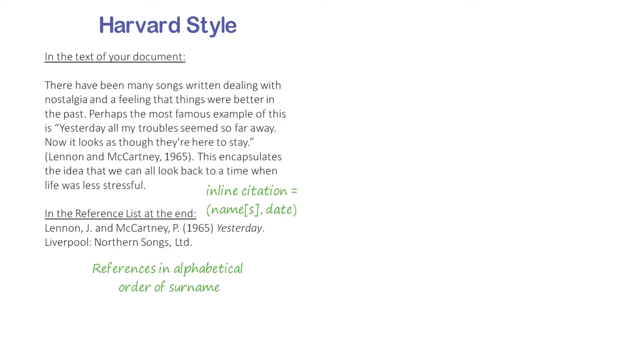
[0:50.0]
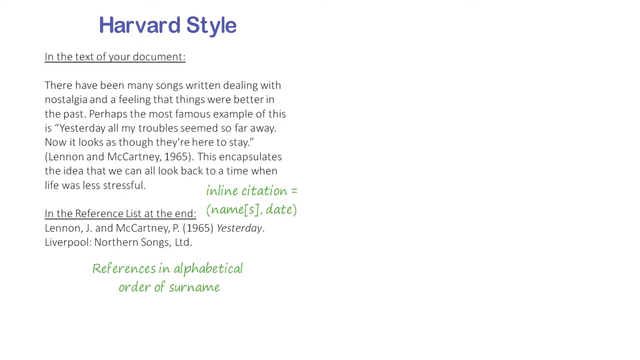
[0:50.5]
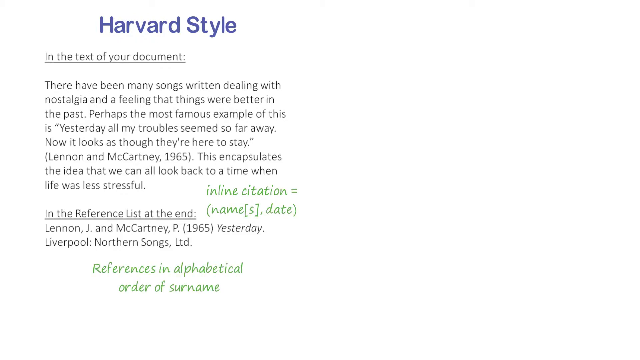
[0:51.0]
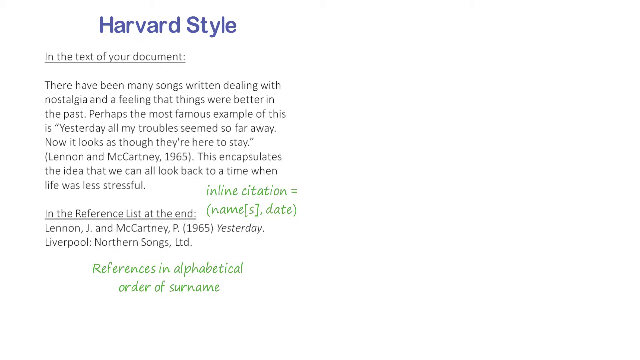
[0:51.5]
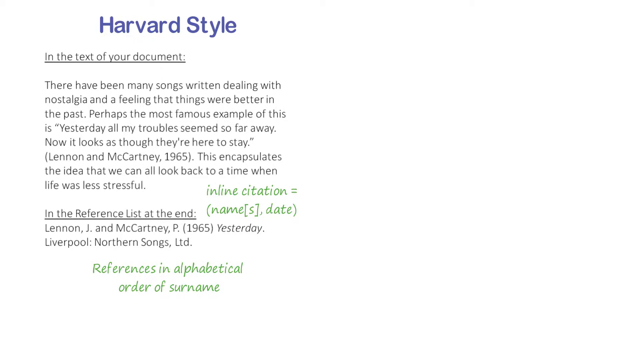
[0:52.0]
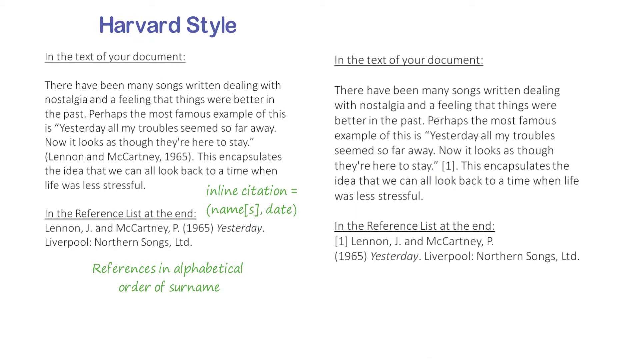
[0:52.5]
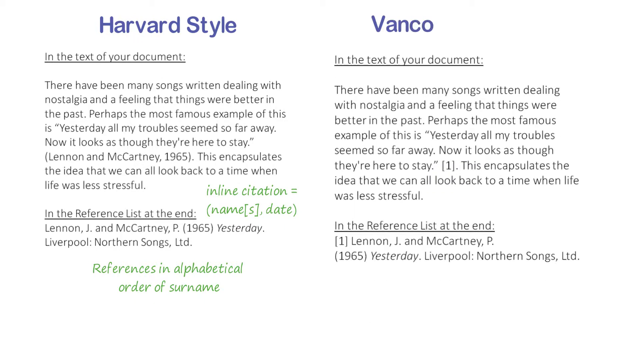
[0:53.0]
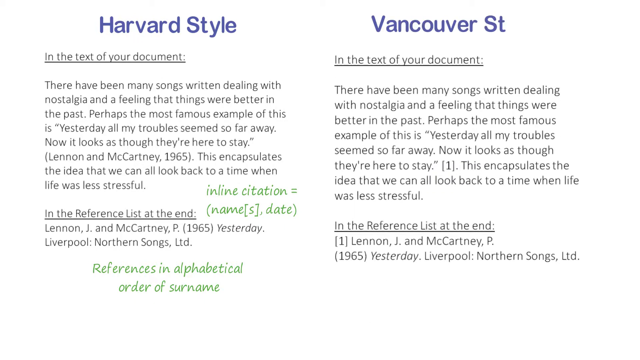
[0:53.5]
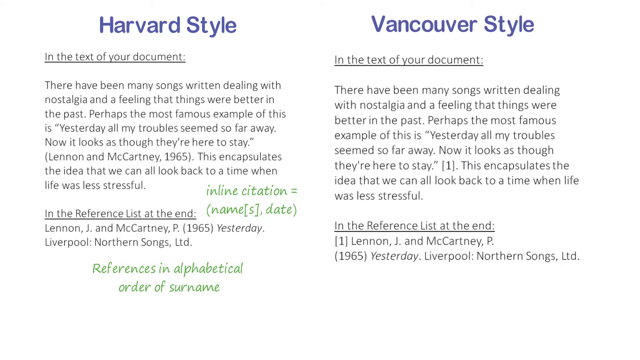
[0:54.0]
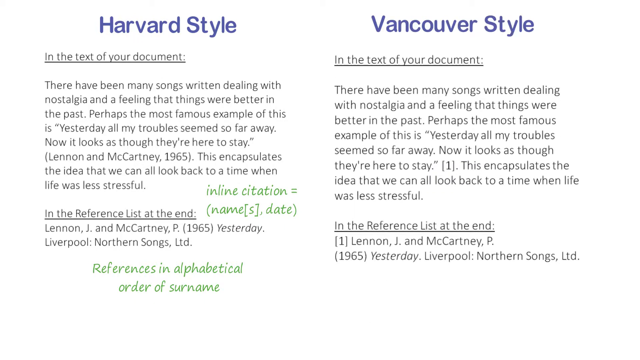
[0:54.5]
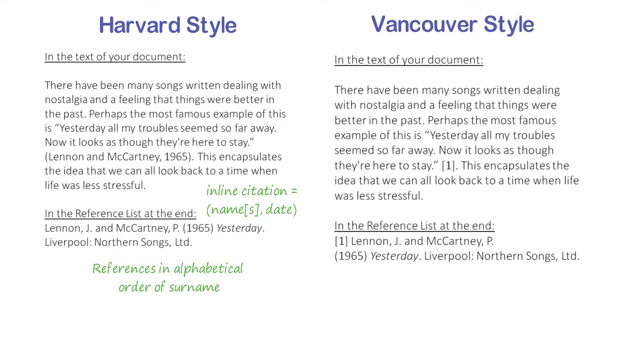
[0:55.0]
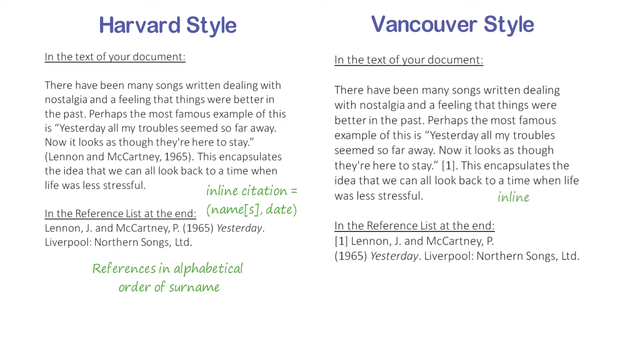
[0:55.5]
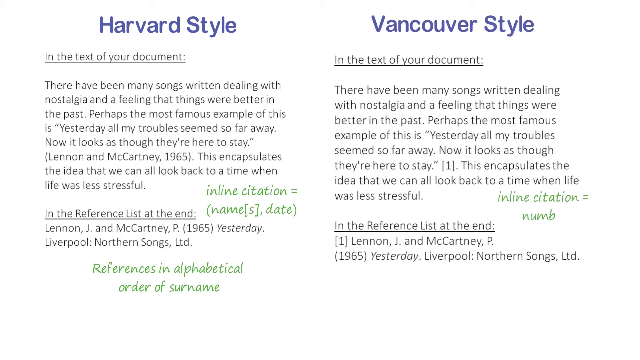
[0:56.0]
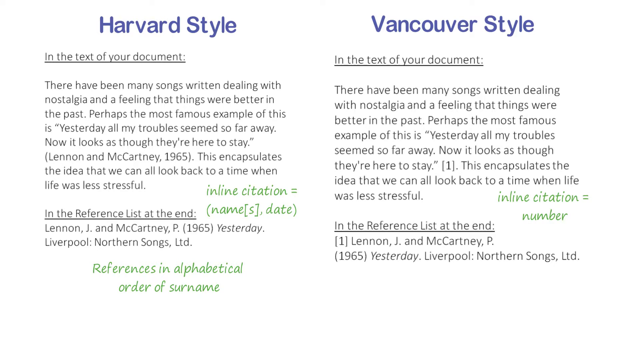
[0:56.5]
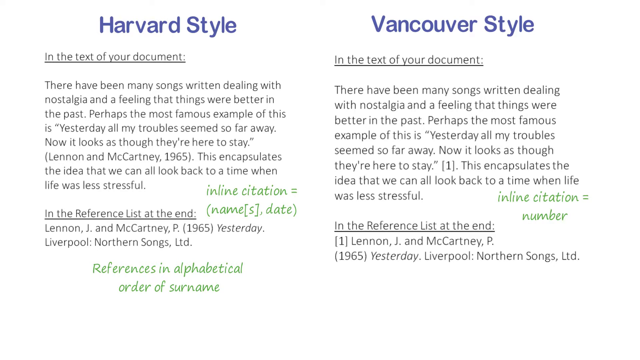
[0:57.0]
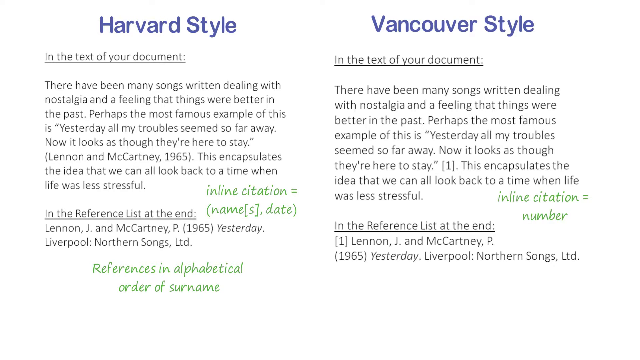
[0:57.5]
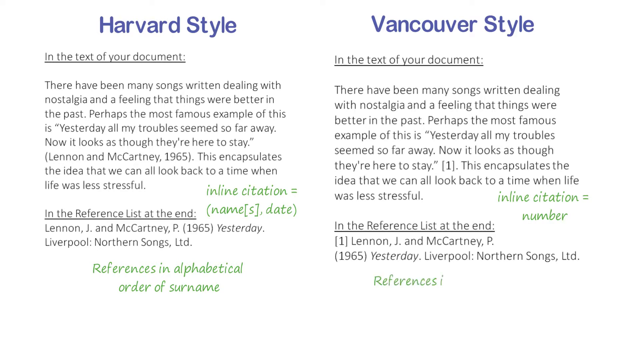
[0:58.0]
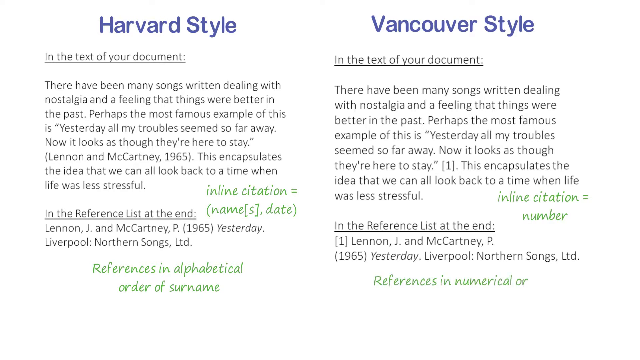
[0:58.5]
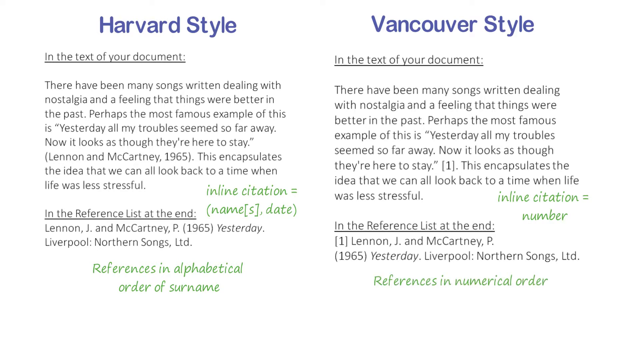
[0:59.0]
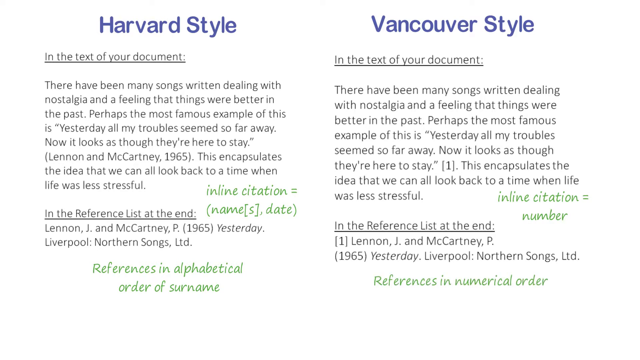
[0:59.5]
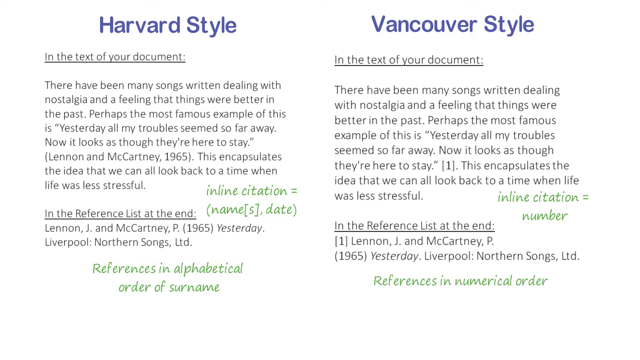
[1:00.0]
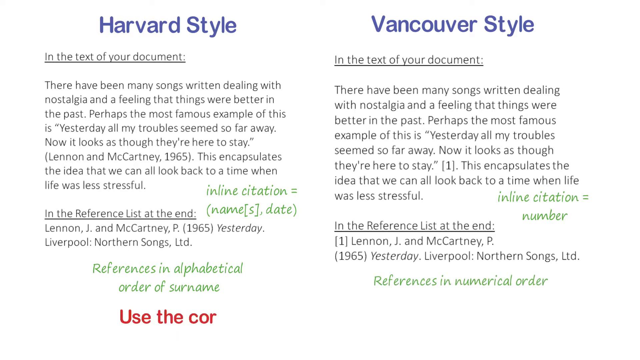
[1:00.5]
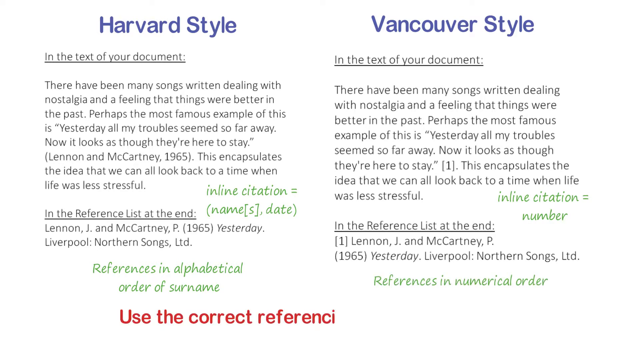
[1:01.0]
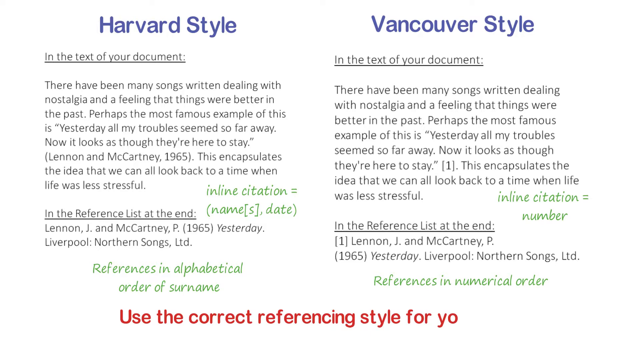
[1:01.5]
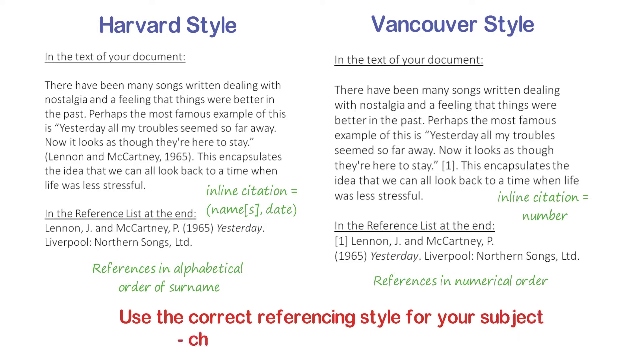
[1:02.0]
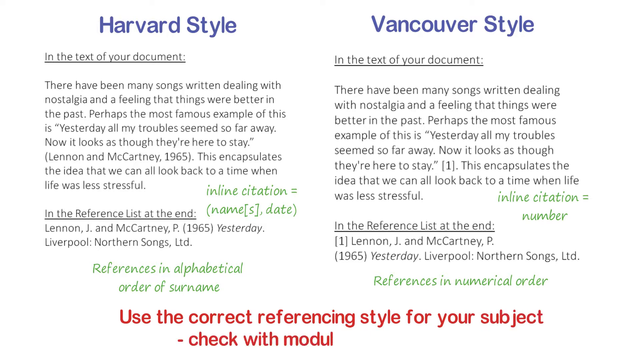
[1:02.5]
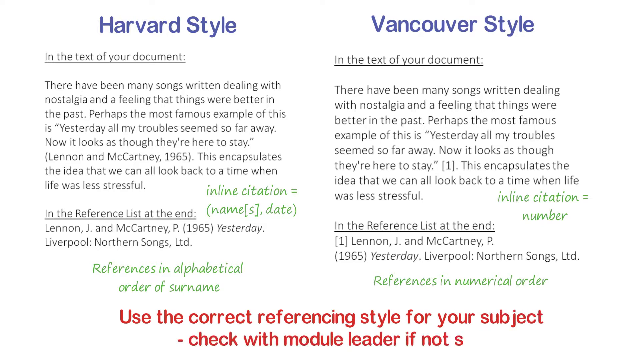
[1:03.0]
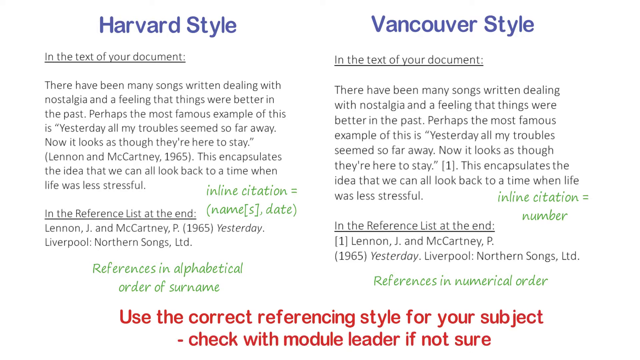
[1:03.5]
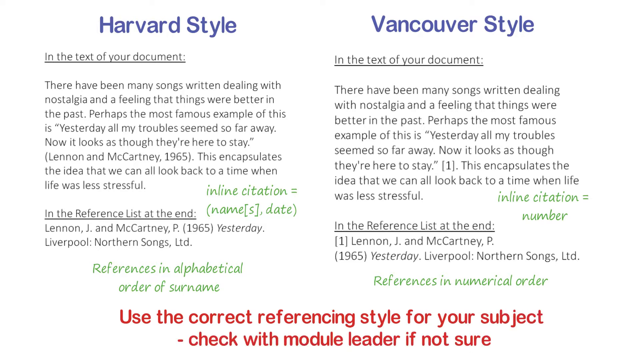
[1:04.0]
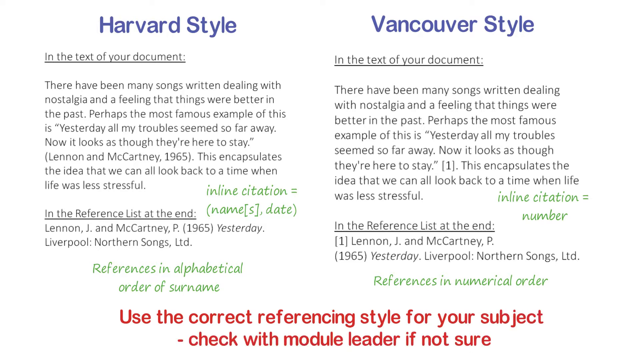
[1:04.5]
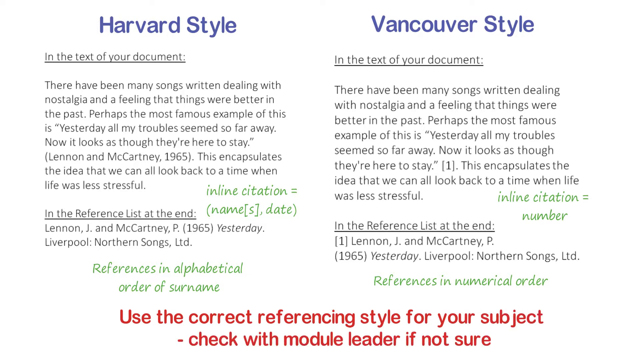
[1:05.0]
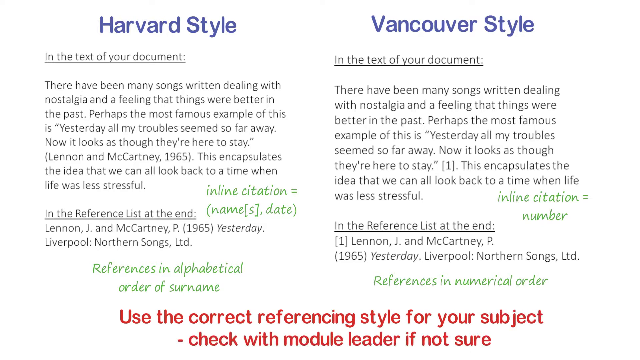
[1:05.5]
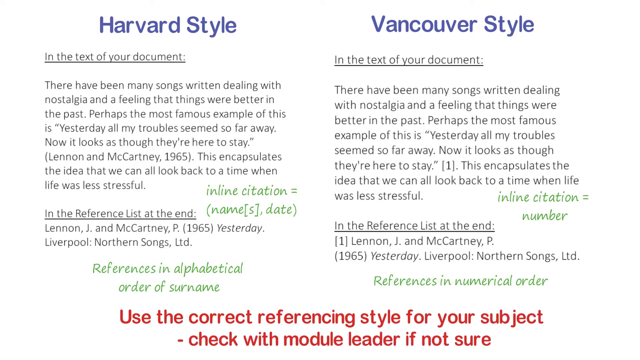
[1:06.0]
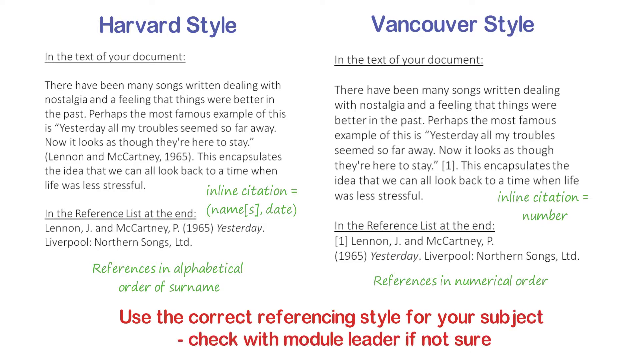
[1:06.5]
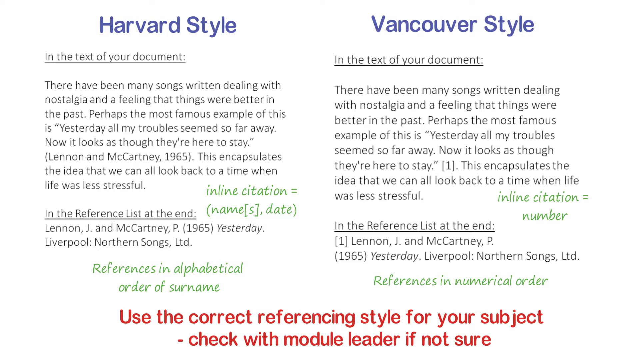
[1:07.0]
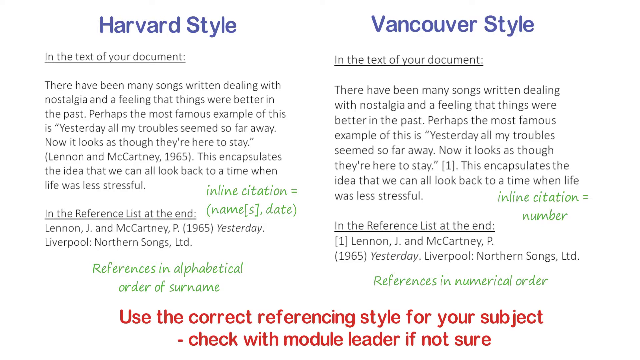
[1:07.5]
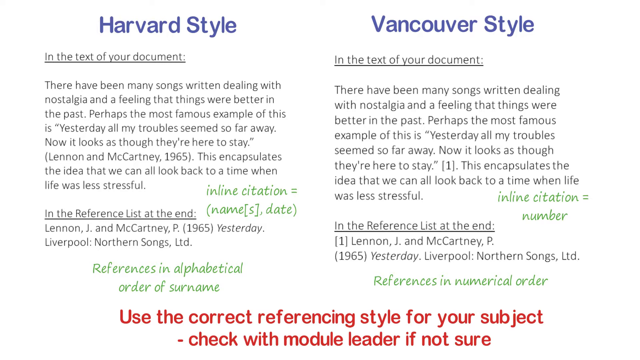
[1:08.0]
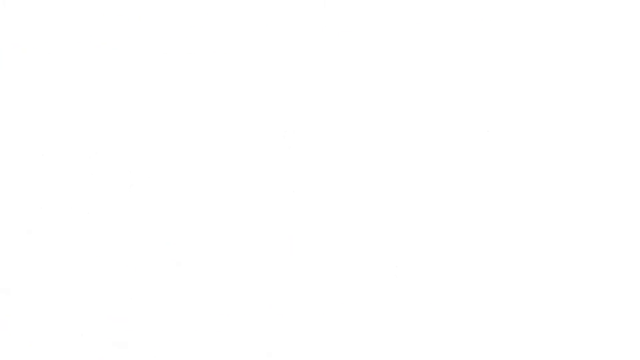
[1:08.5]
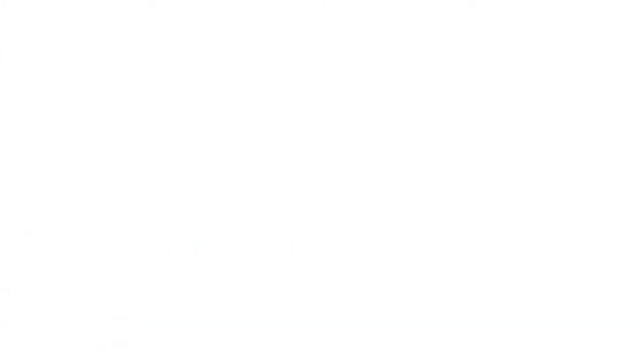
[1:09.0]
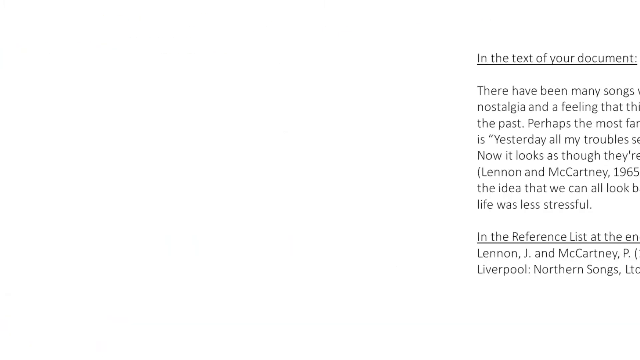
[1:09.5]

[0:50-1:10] The screen is white. At the top of the right side of the screen is "Harvard style," and directly underneath it is "In the text of your document," followed by the text "There have been many songs written dealing with nostalgia and a feeling that things were better in the past. Perhaps the most famous example of this is Yesterday. All my troubles seemed so far away, now it looks as though they're here to stay. Lennon and McCartney, 1965. This encapsulates the idea that we can all look back to a time when life was less stressful." Directly underneath, in green, is "Inline citation = names and dates." Below that, in black, is "In the reference list at the end: Lennon, J. and McCartney, P., 1965, Yesterday, Liverpool, Northern Songs, LTD," and under that, in green, "References in alphabetical order of surname." At the top right of the screen, in blue, is "Vancouver style," with "In the text of your document" beneath it, followed by "There have been many songs written dealing with nostalgia and a feeling that things were better in the past. Perhaps the most famous example of this is Yesterday. All my troubles seemed so far away, now it looks as though they're here to stay. This encapsulates the idea that we can all look back to a time when life was less stressful." Underneath, in green, is "Inline citation = number," then "In the reference list at the end: 1 Lennon, J. and McCartney, P., 1965, Yesterday, Liverpool, Northern Songs, LTD," and directly under that, in green, "References in numerical order." Red text then types out from left to right: "Use the correct referencing style for your subject. Check with module leader if not sure."